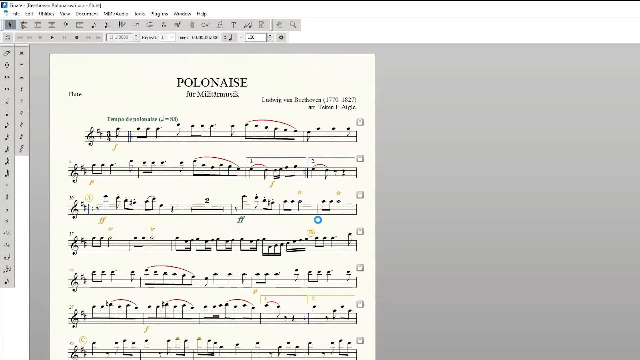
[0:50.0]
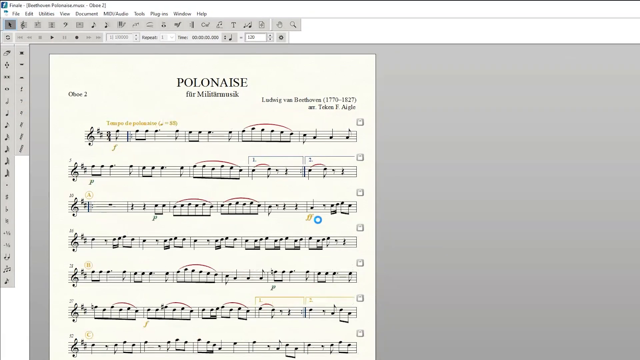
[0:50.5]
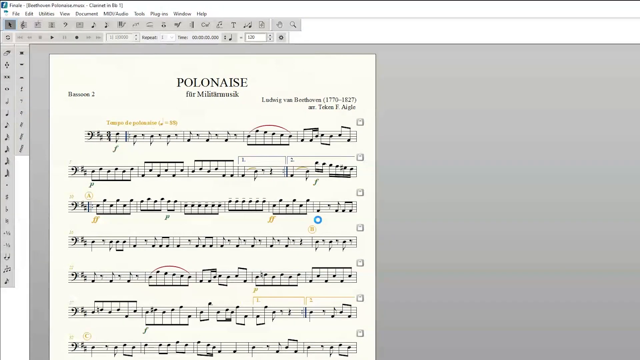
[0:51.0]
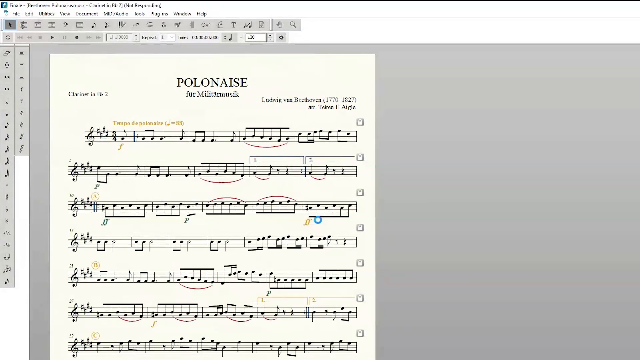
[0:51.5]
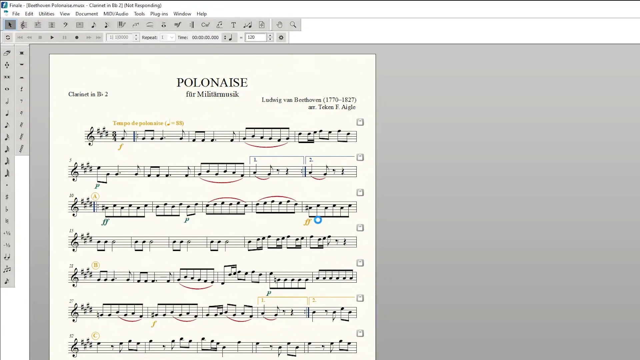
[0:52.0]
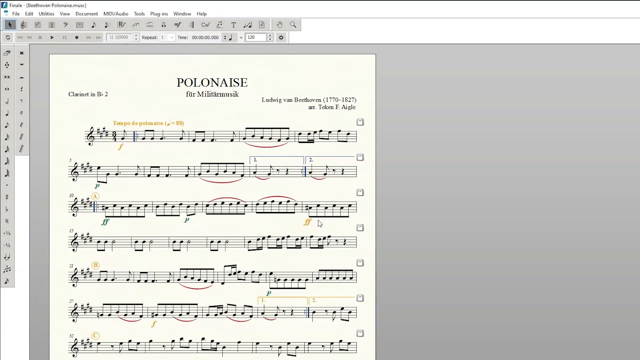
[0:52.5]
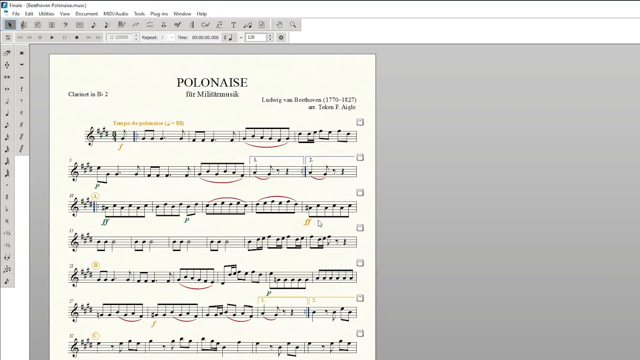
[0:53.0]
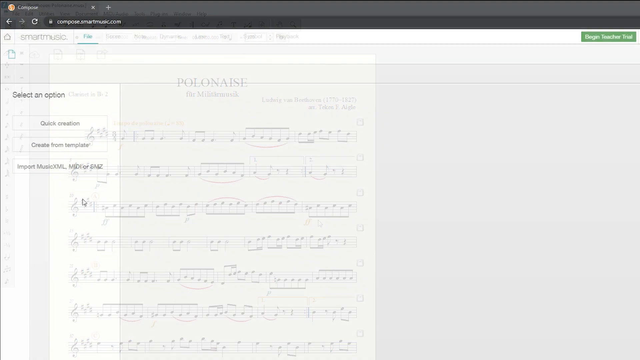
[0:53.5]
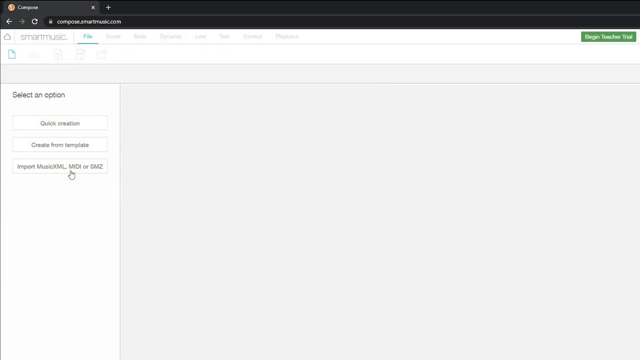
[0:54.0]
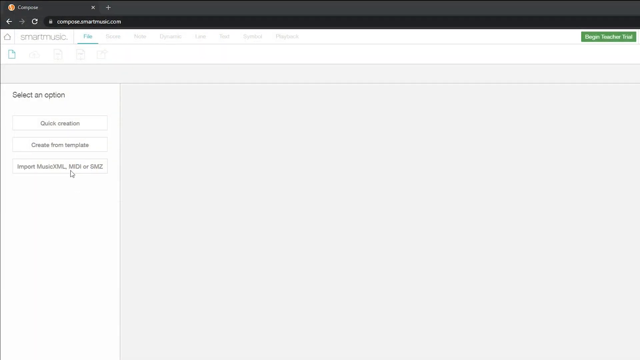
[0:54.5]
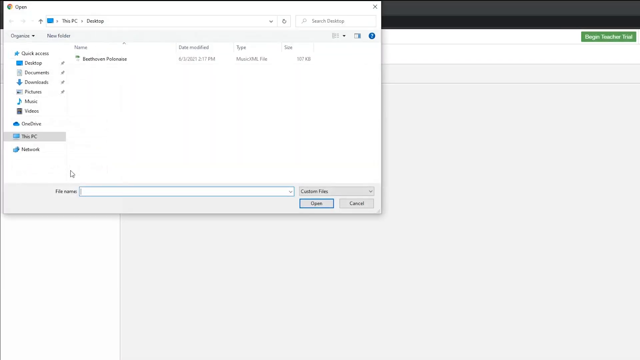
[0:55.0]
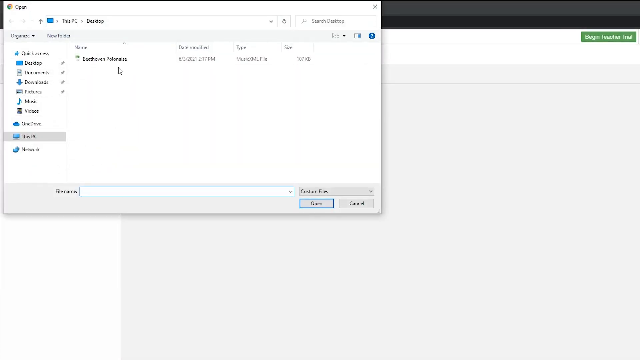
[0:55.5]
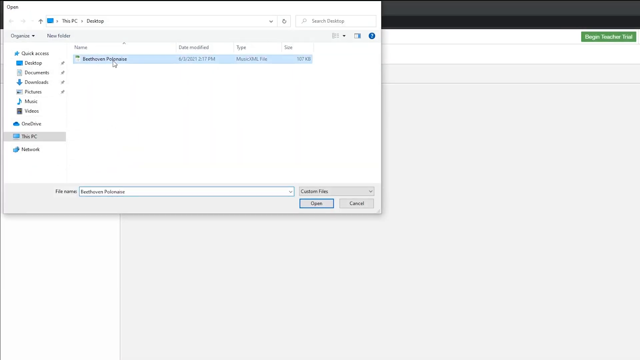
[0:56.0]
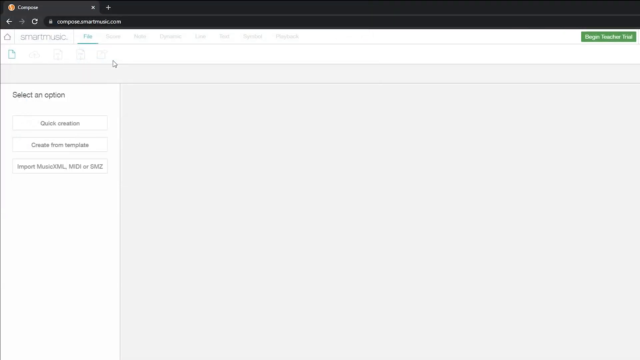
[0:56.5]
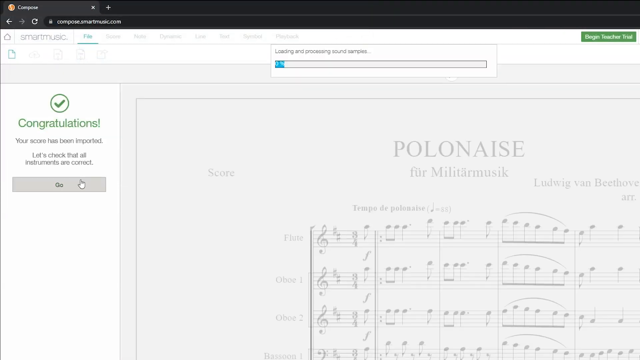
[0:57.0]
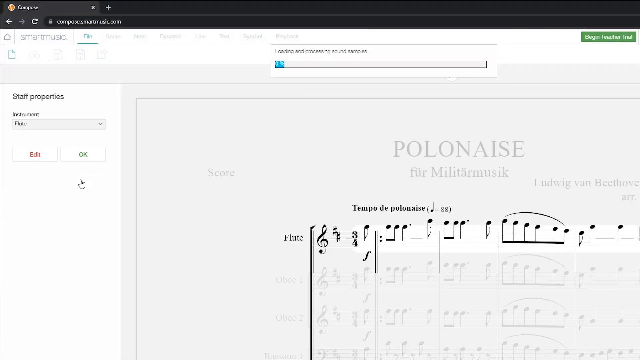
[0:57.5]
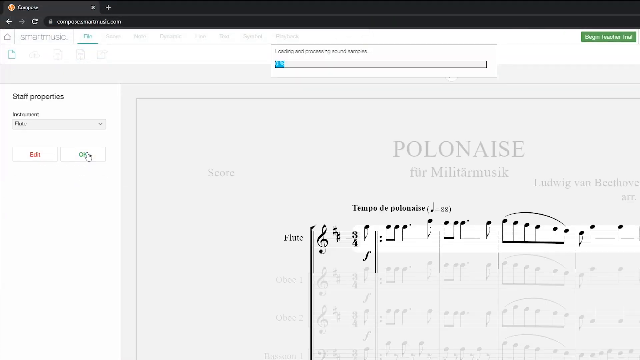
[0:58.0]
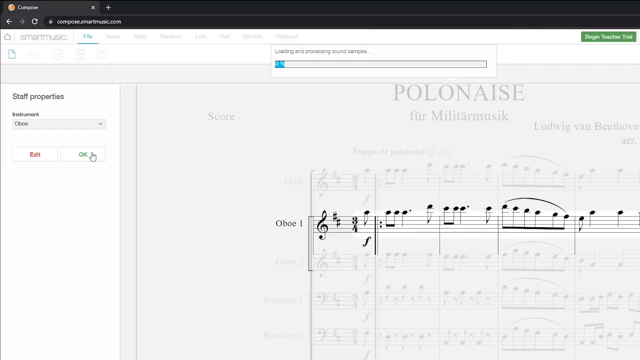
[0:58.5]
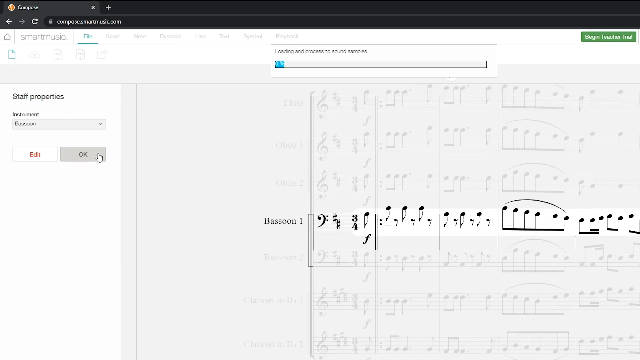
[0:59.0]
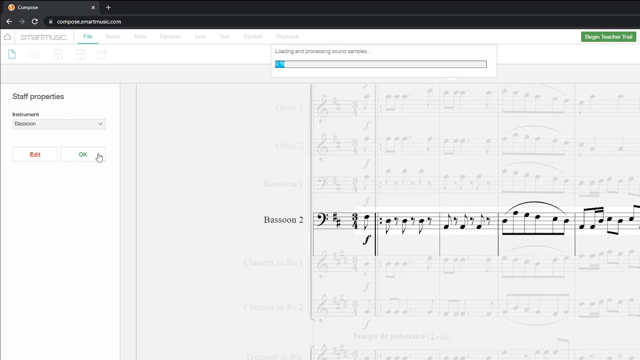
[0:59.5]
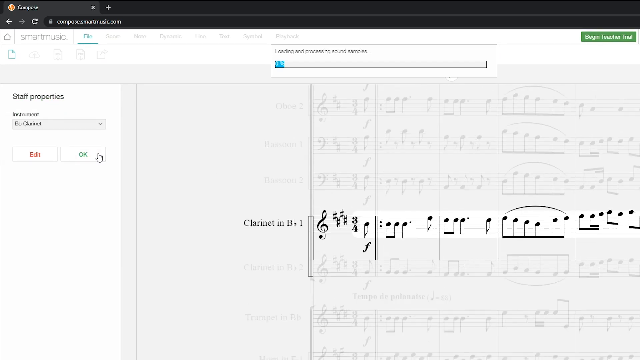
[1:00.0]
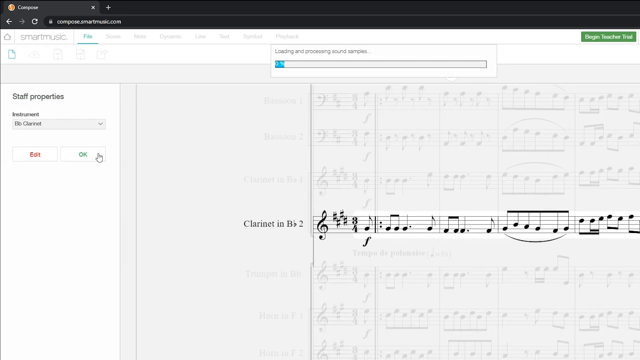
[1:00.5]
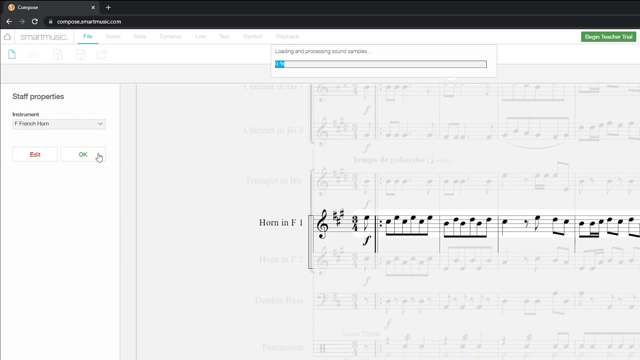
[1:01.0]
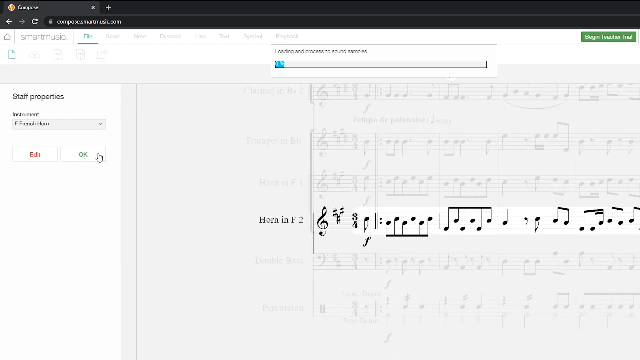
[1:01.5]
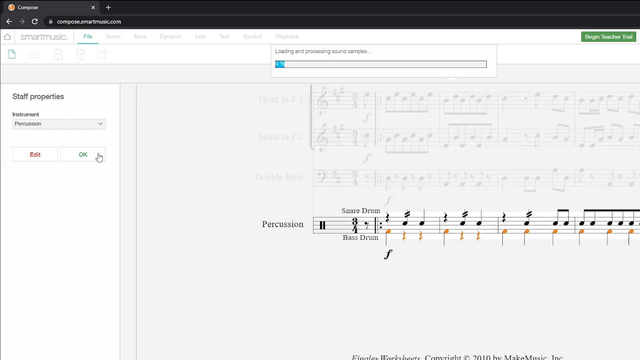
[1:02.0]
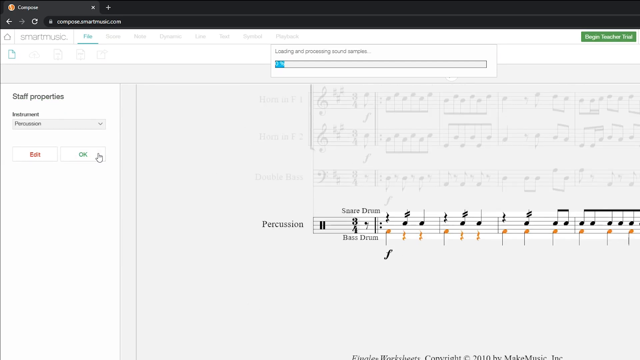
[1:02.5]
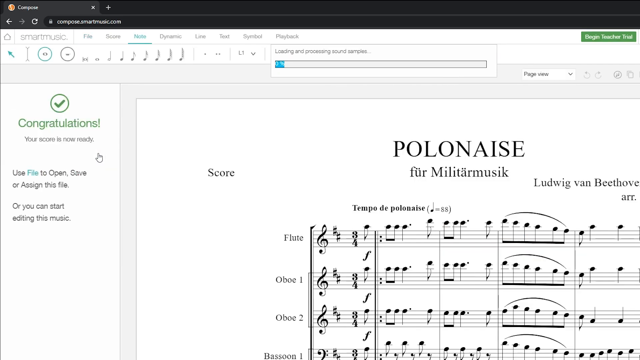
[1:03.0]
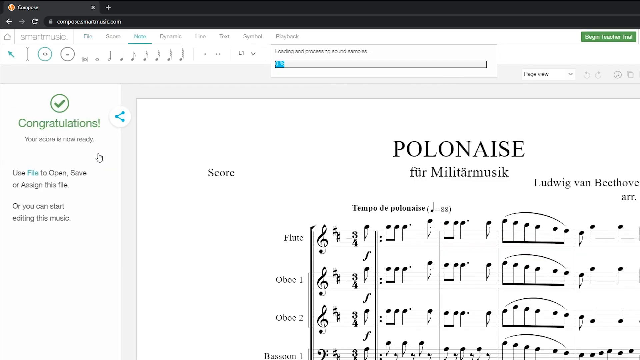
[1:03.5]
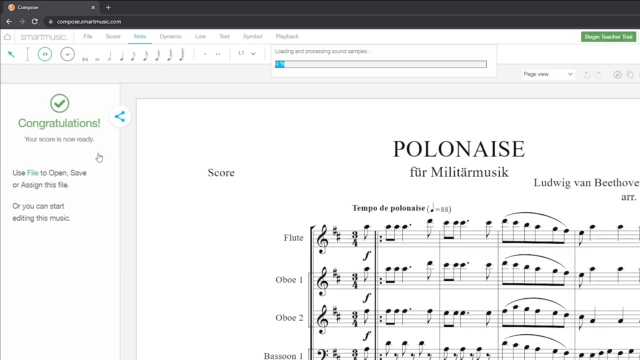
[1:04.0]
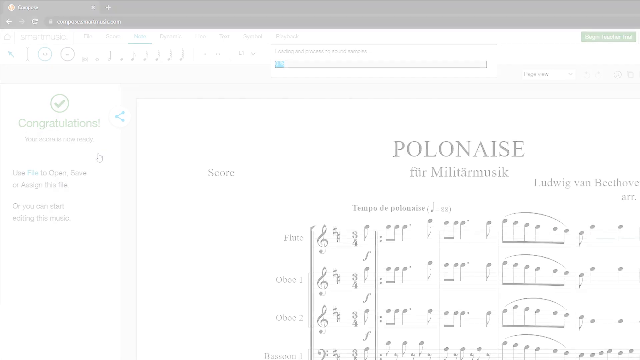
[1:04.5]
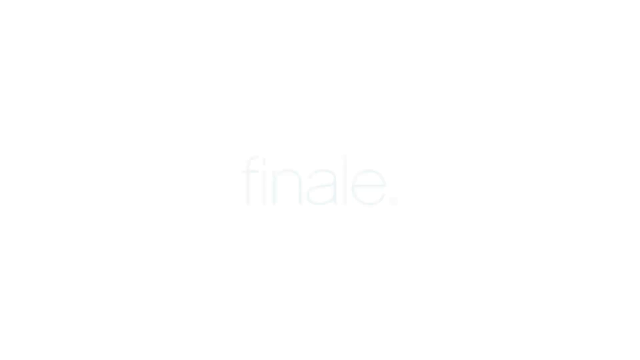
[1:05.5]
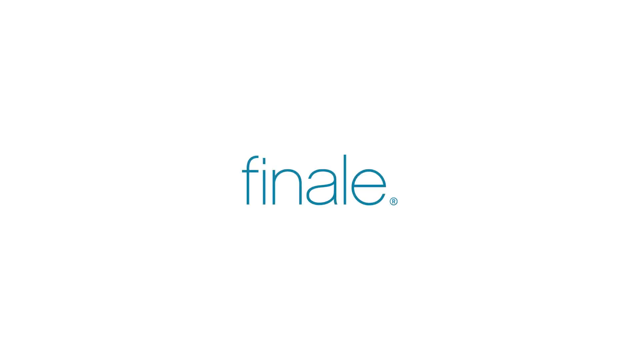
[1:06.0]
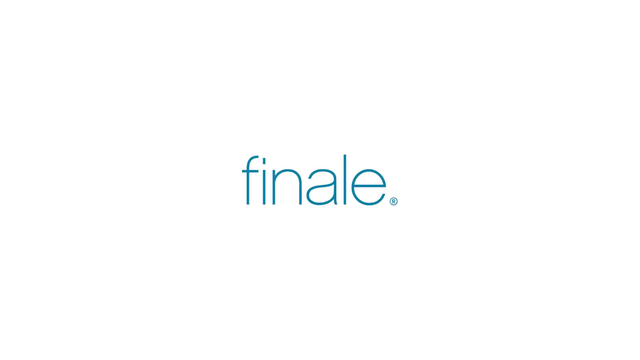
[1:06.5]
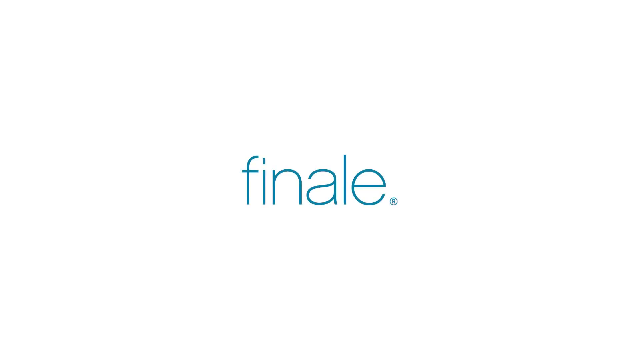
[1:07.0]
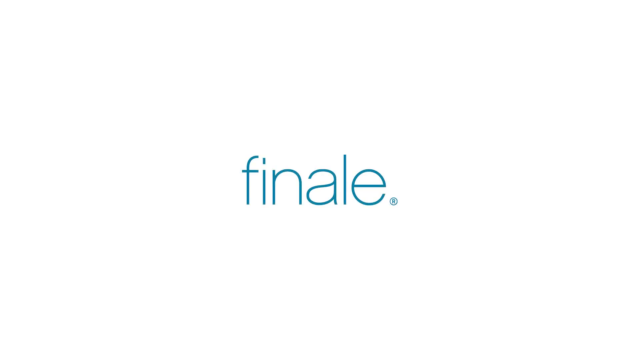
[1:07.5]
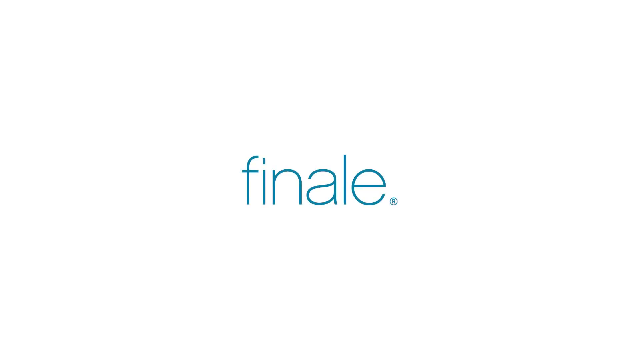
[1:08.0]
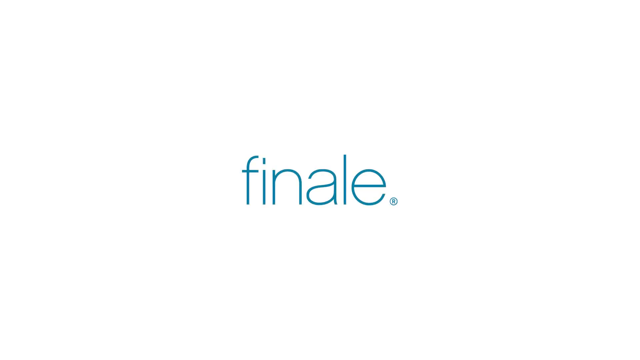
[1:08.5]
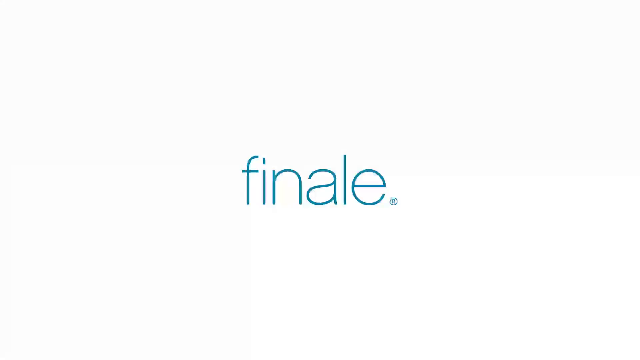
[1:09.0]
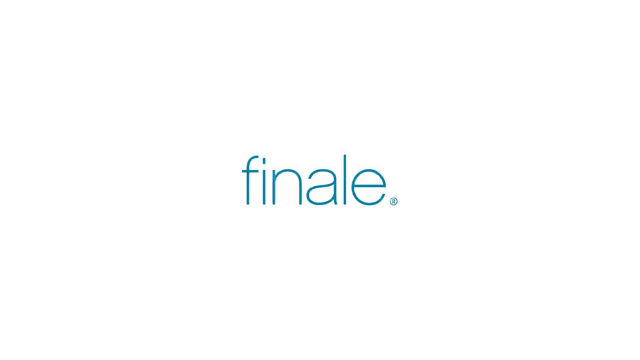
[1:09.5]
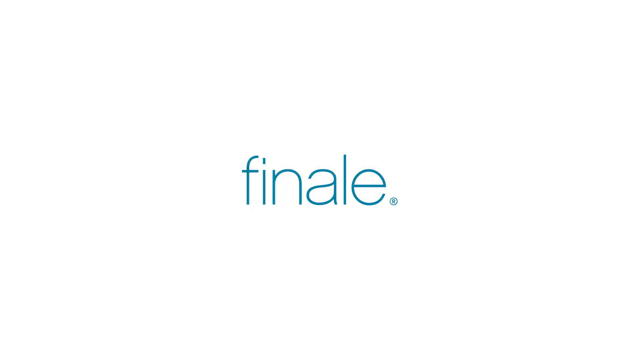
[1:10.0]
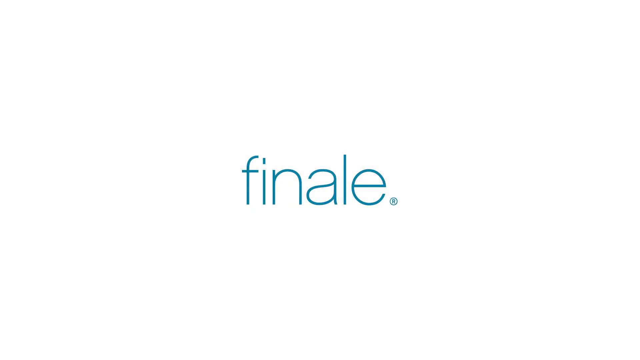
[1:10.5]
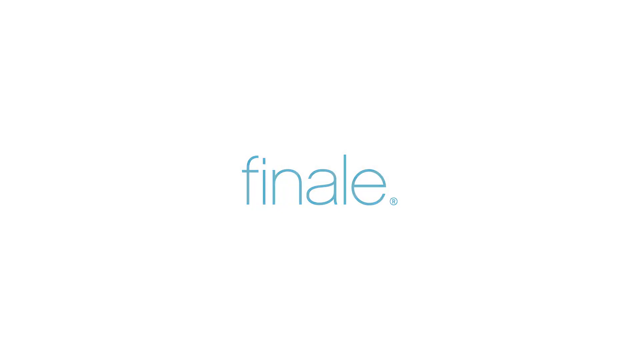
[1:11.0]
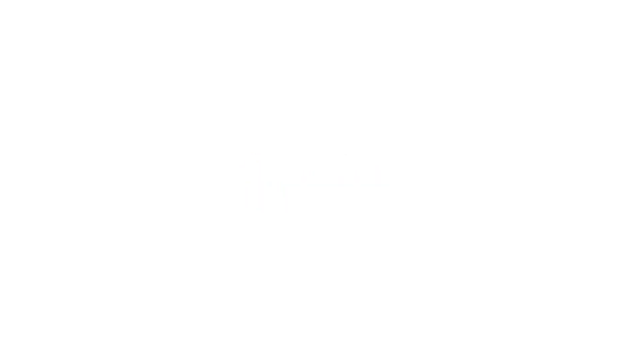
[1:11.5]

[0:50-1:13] More features of Finale are shown on a Windows machine. Editing takes place on a piece titled "Polonaise" by Ludwig van Beethoven, with the years of his birth and death shown as 1770 to 1827. A "select an option" pop-up appears, and the third option, "import music xml midi or smz", is selected. This opens a file location window, and under This PC in the side menu, Beethoven Polonaise is selected. A congratulations window pops up indicating that the upload was successful. Another side menu, titled "staff properties", has an instrument drop-down menu in which flute is selected and clicked. A time-lapse or progress bar at the top shows loading and processing of sound samples. Under staff properties, bassoon is then selected as the instrument and clicked, and the view kind of scrolls through all the musical instrument options available in the side menu.